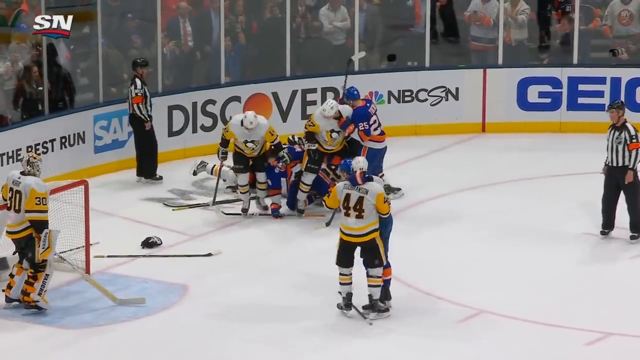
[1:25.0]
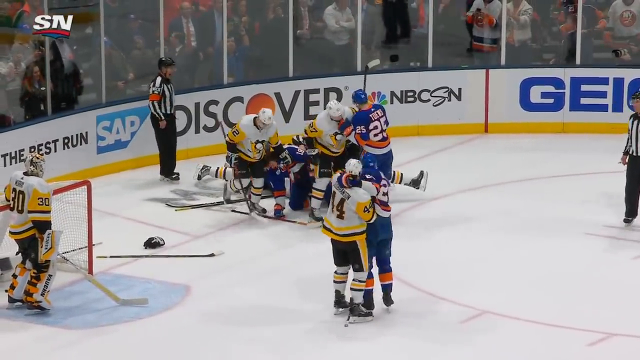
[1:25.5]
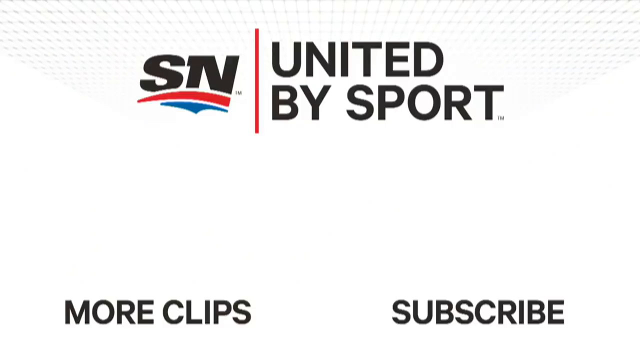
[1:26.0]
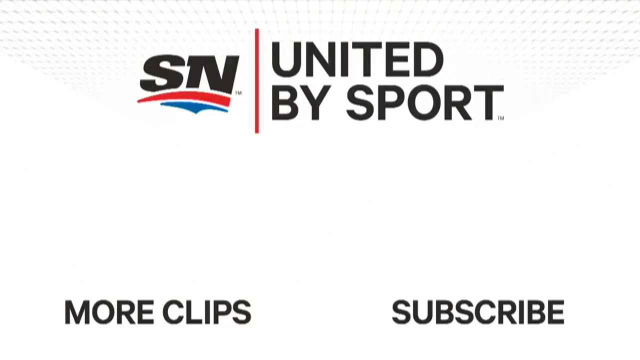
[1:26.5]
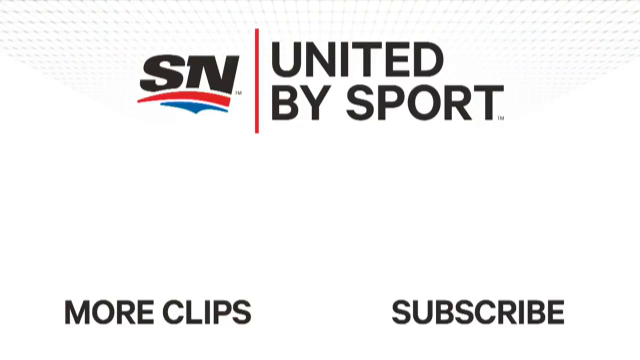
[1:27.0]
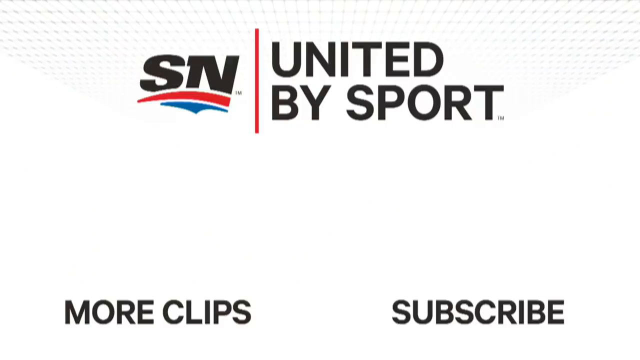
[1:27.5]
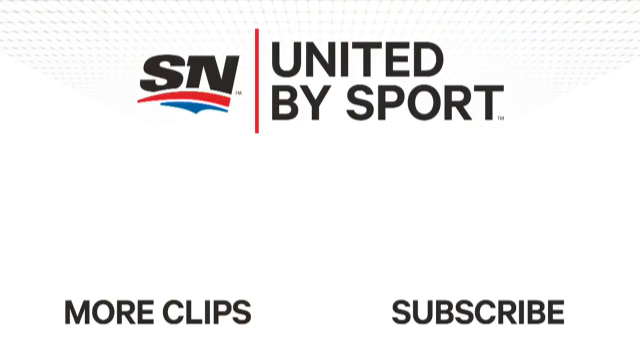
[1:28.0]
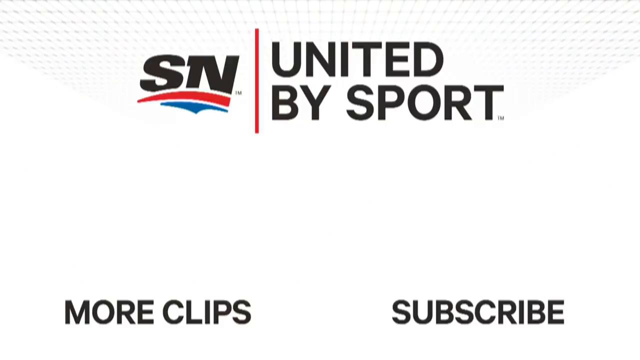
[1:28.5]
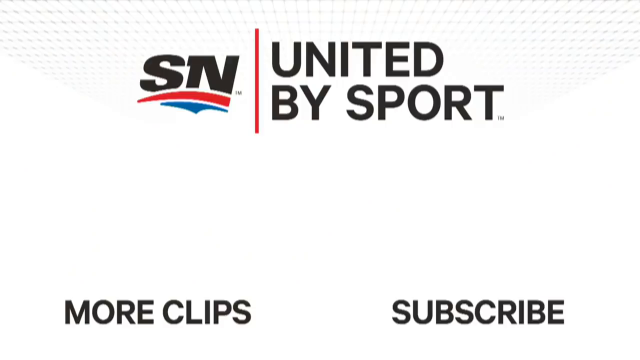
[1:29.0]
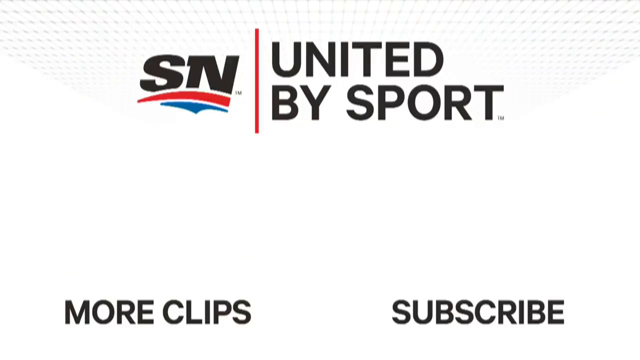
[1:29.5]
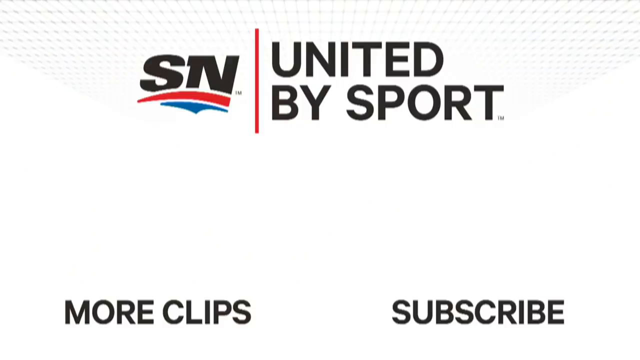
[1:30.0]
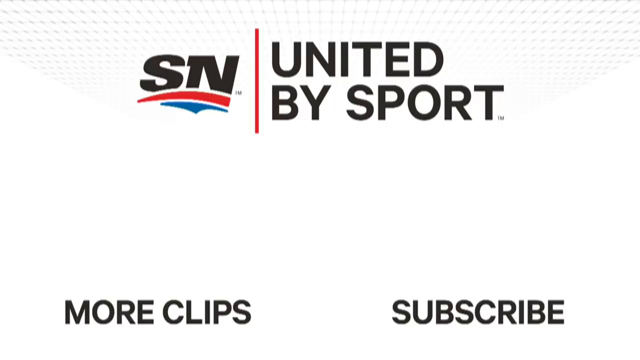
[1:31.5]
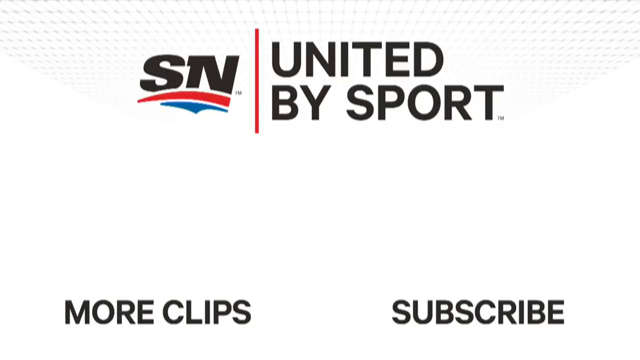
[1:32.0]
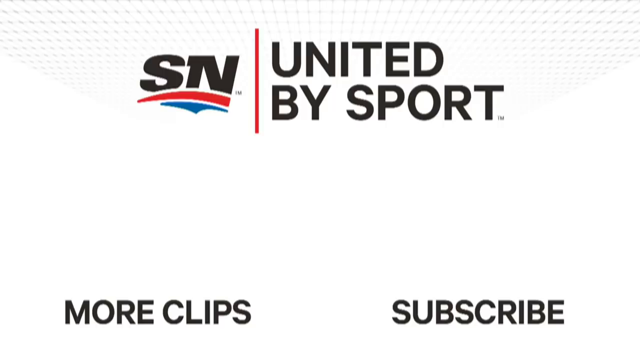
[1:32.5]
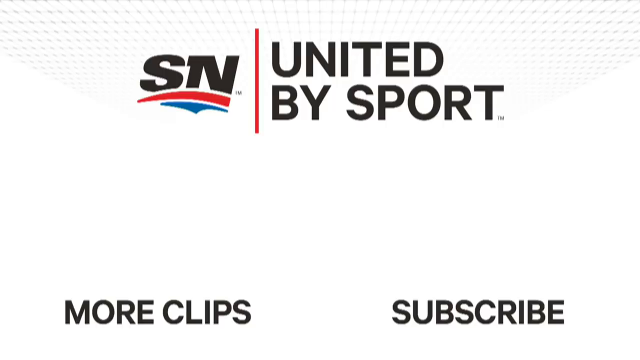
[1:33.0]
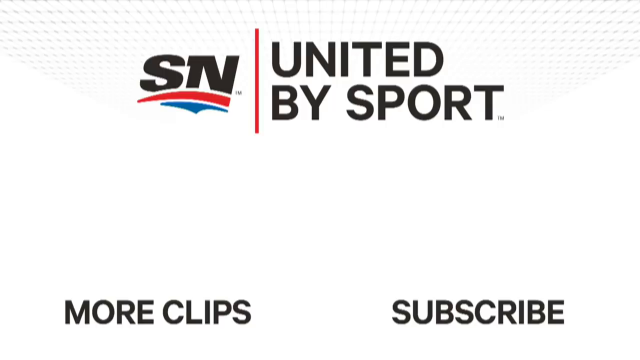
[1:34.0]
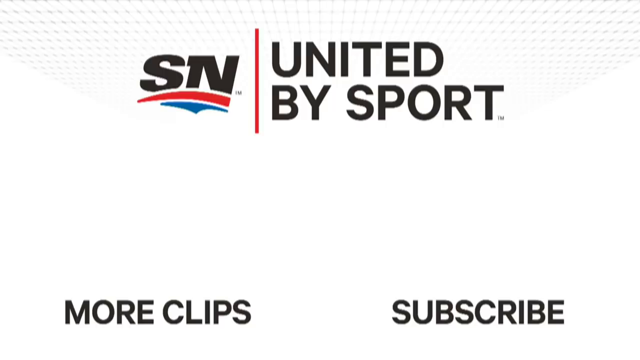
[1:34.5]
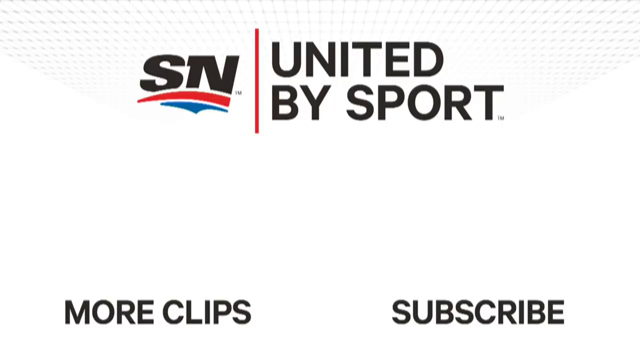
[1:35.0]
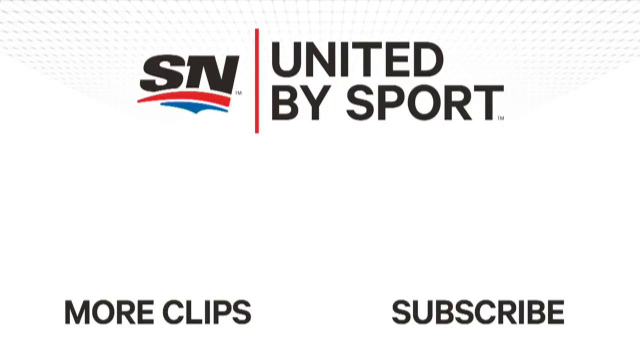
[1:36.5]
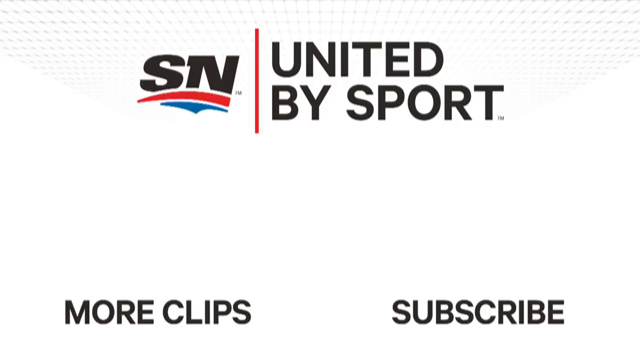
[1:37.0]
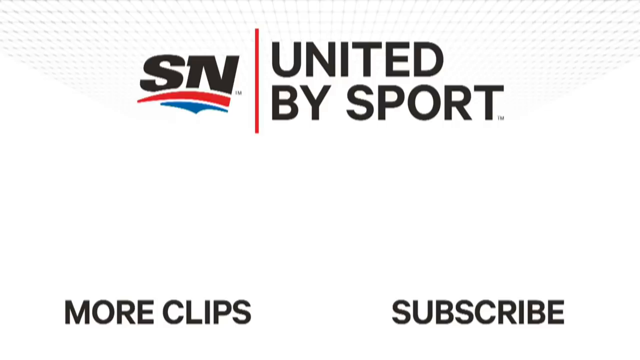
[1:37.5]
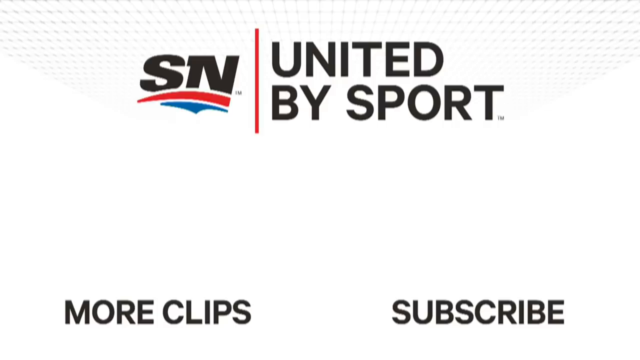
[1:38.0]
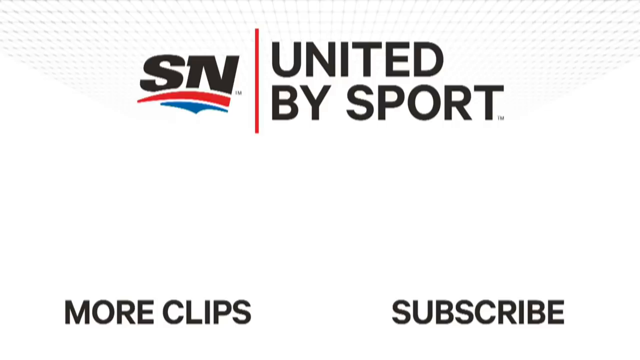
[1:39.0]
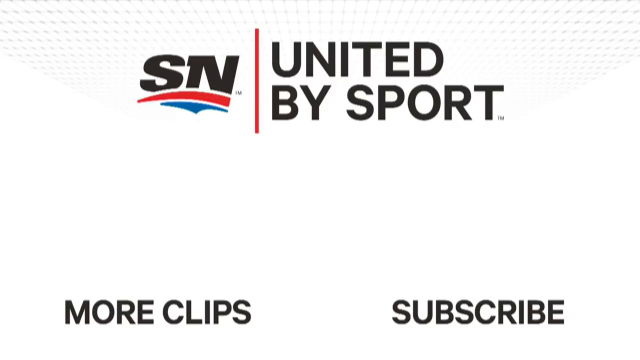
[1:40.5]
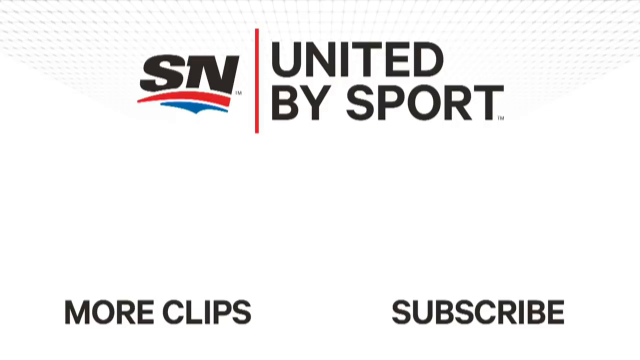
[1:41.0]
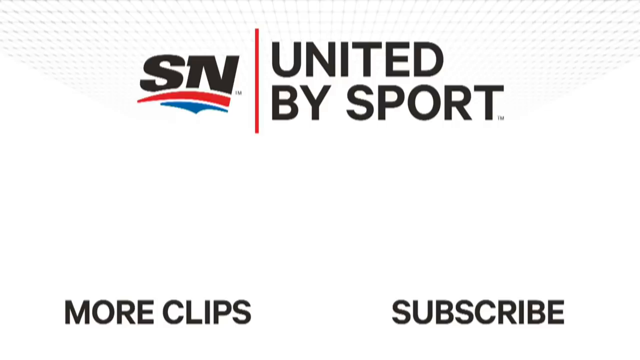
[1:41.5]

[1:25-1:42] The end of a highlight video for what appears to be a hockey game shows a blank white screen. At the top is a logo with the letters S and N, a red streak and underneath it a blue streak. There is a trademark logo and a bar separating two words; on the right side of the bar it says "United by Sport" with another trademark logo. At the bottom are two buttons, one saying "subscribe" and one saying "more clips". For a brief second, a link to other videos on the channel flashes on screen, along with a circular link bearing the channel thumbnail that can be clicked to subscribe to the channel.